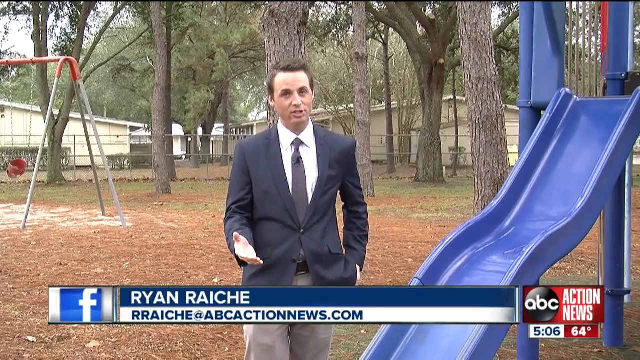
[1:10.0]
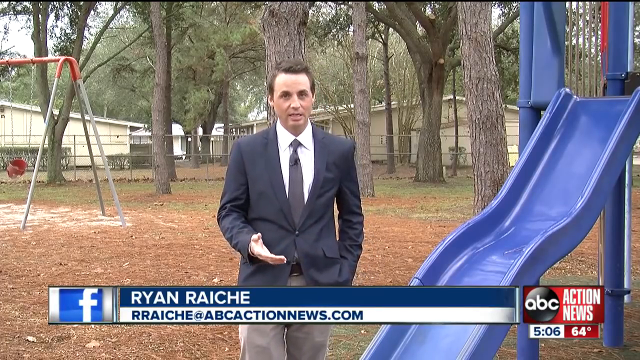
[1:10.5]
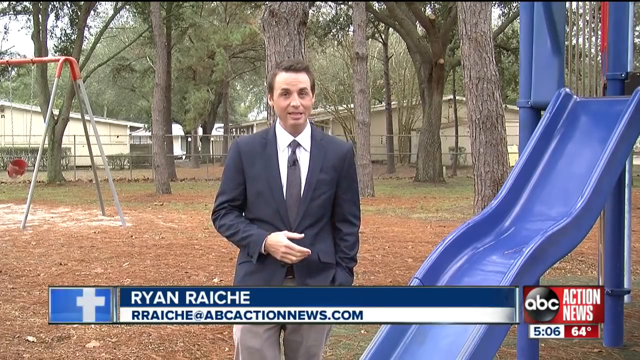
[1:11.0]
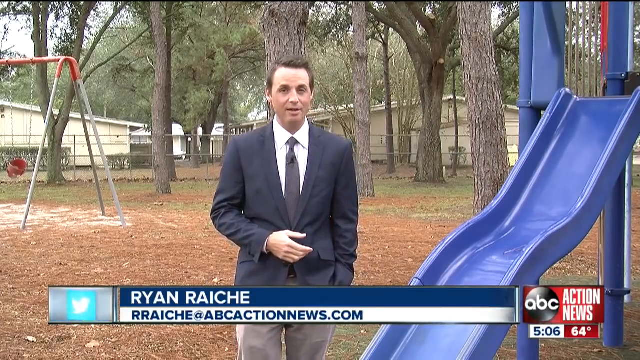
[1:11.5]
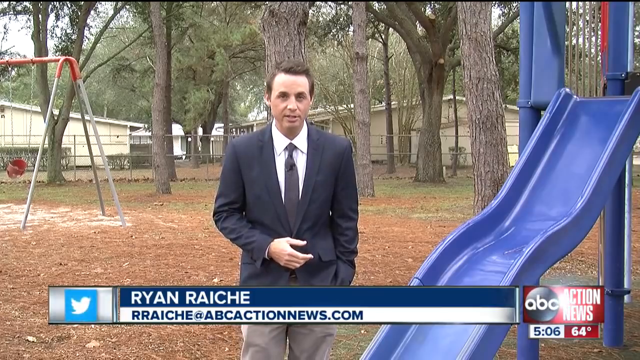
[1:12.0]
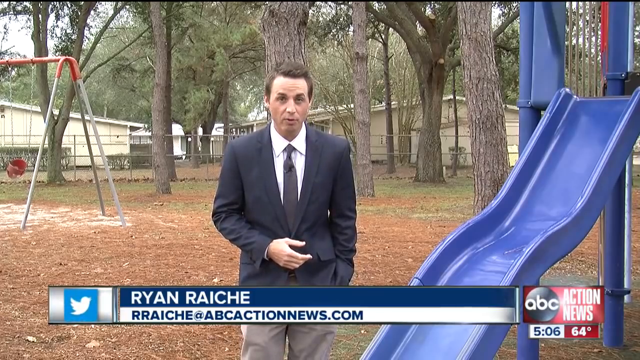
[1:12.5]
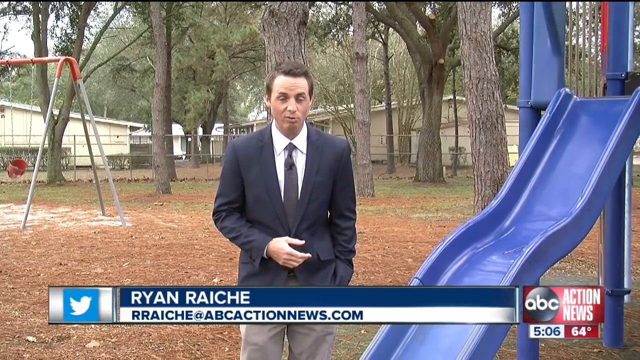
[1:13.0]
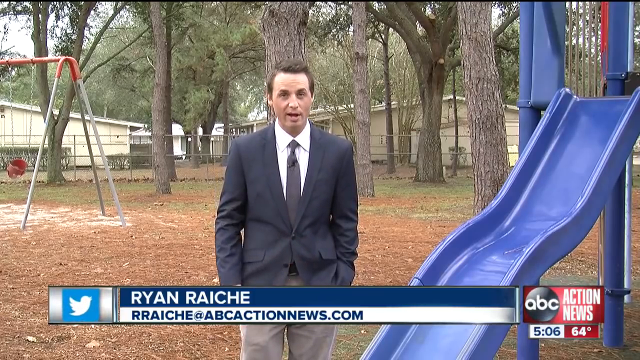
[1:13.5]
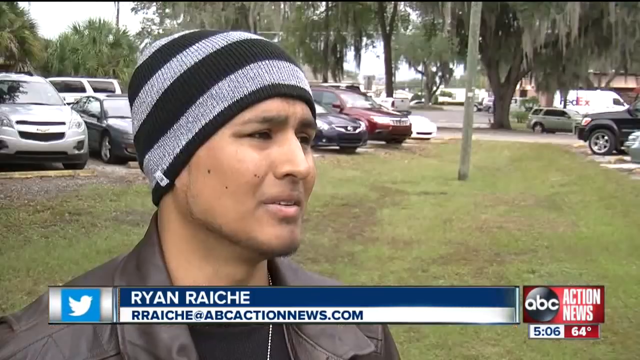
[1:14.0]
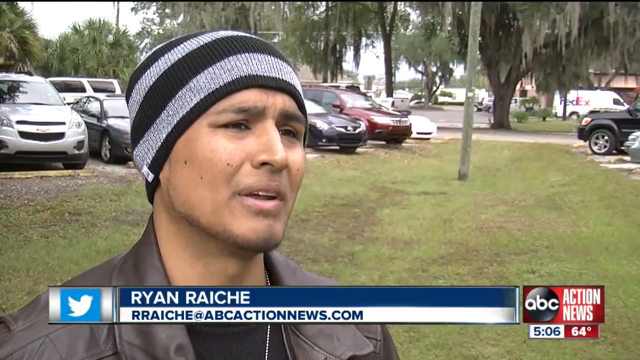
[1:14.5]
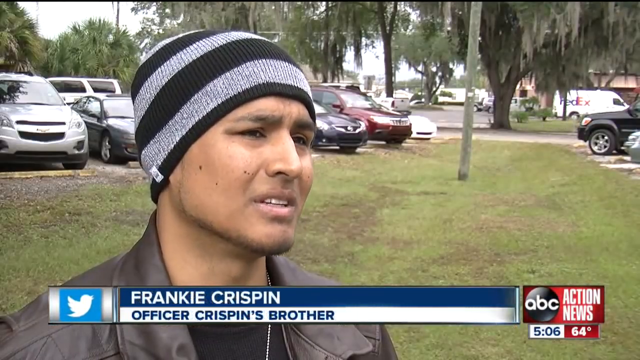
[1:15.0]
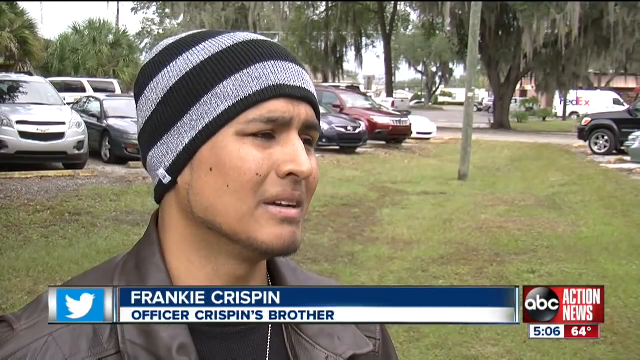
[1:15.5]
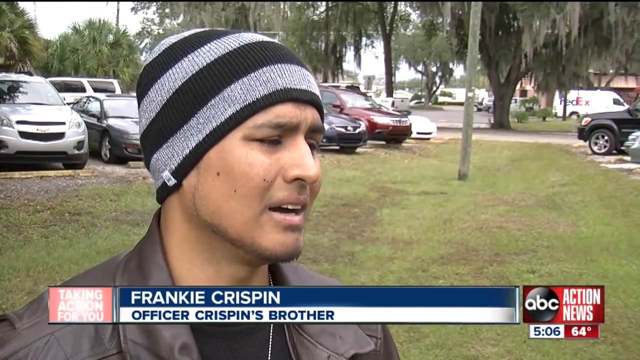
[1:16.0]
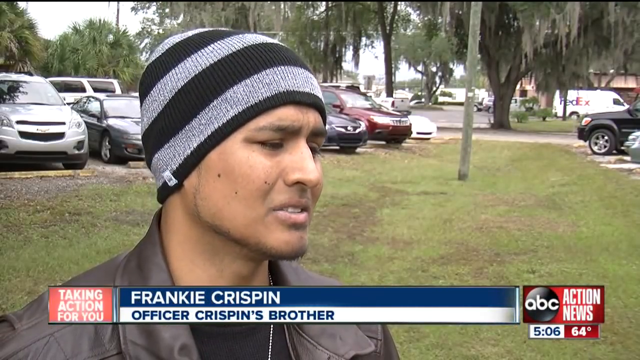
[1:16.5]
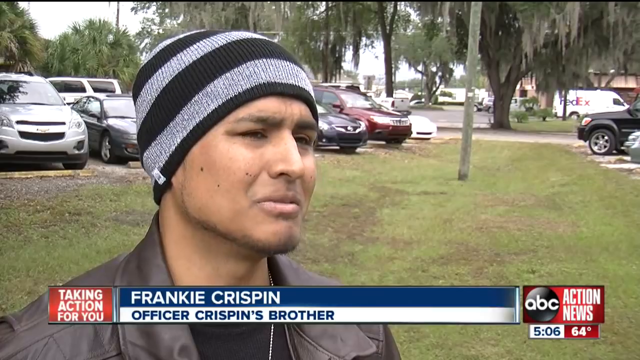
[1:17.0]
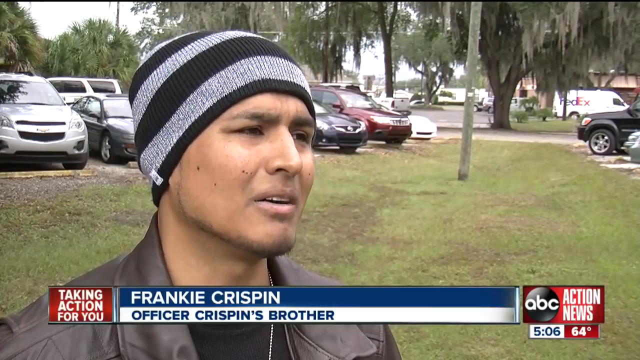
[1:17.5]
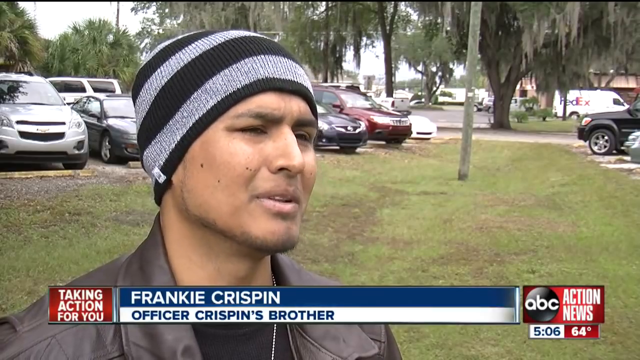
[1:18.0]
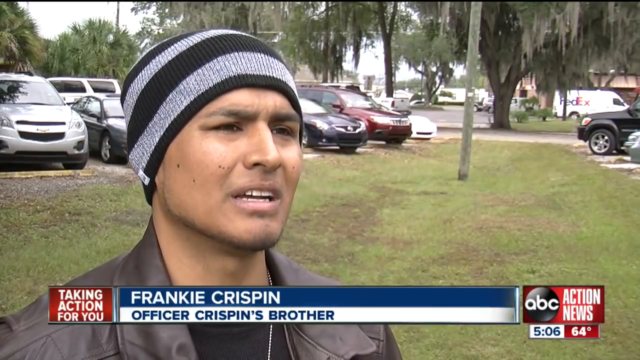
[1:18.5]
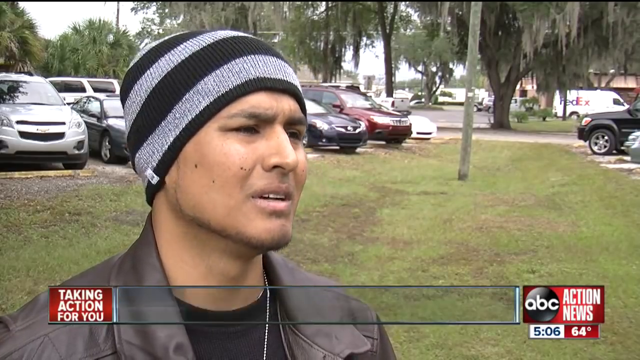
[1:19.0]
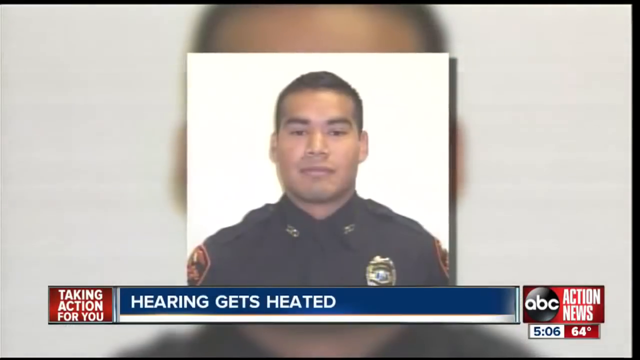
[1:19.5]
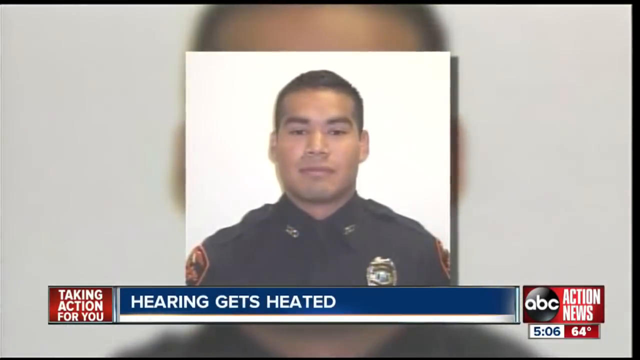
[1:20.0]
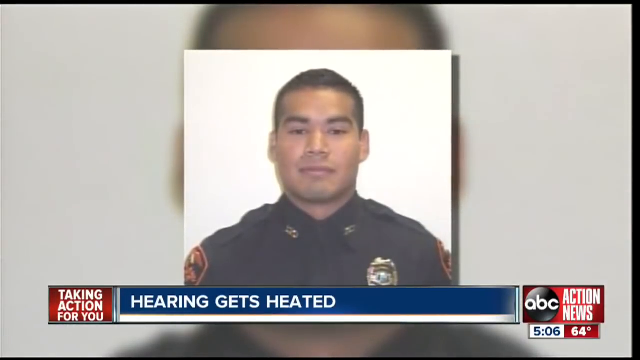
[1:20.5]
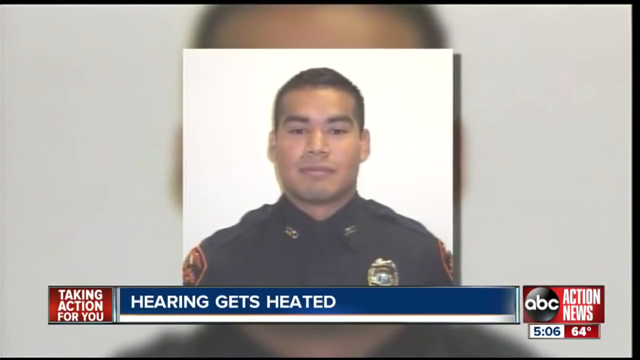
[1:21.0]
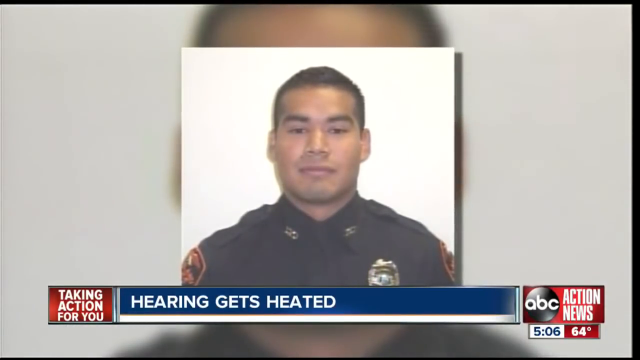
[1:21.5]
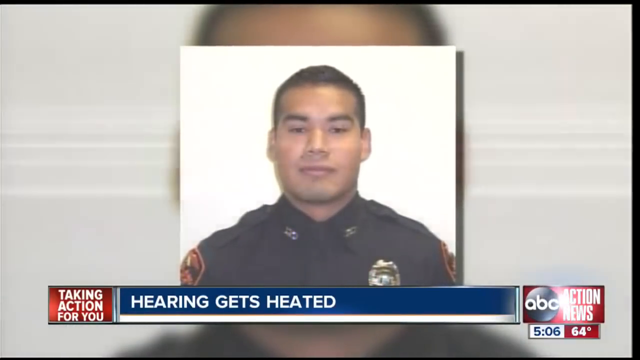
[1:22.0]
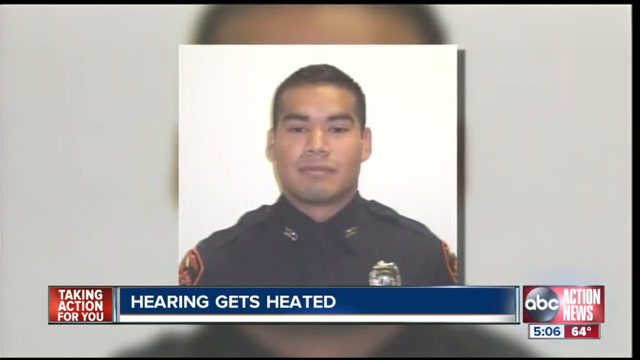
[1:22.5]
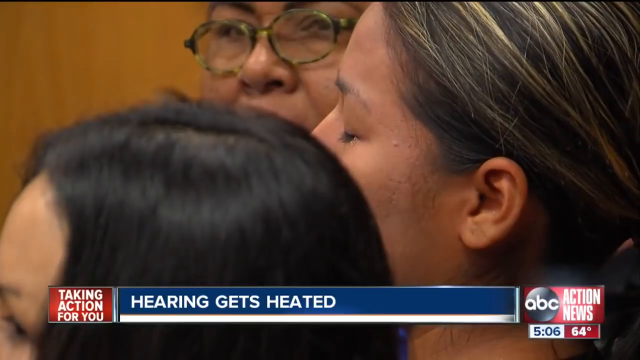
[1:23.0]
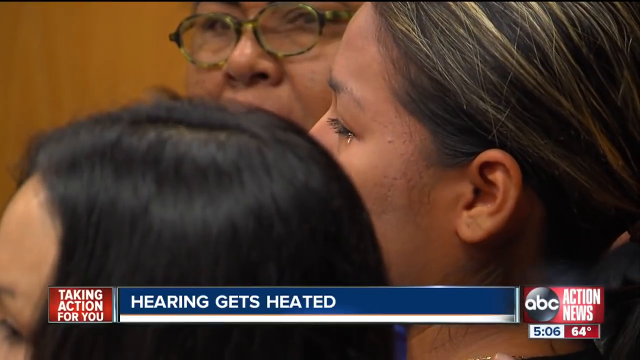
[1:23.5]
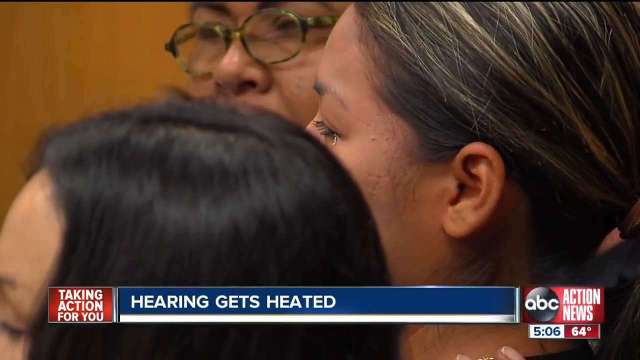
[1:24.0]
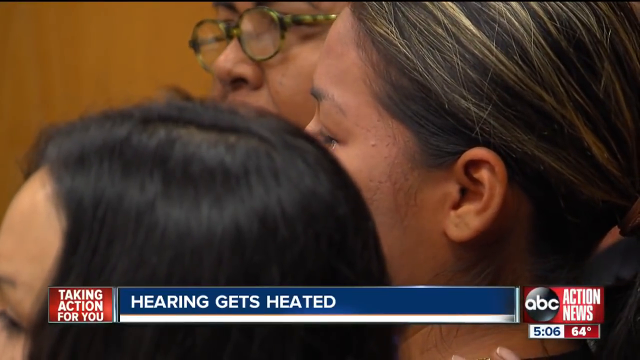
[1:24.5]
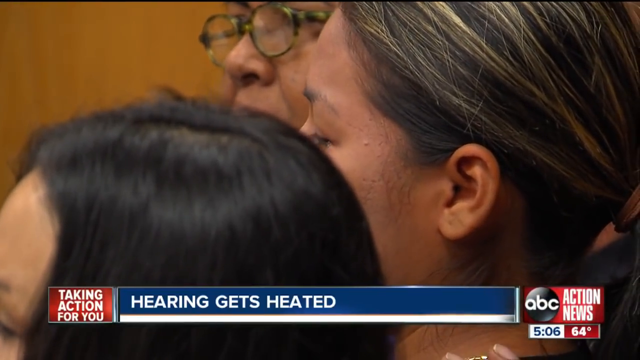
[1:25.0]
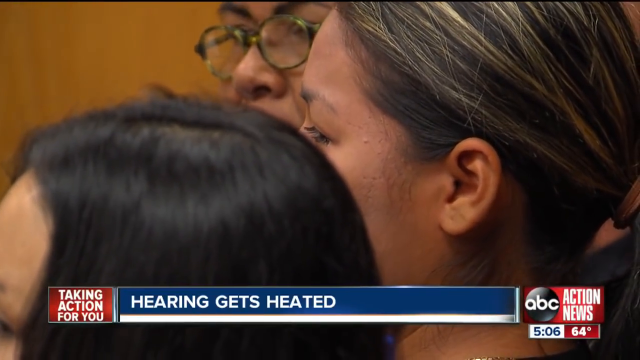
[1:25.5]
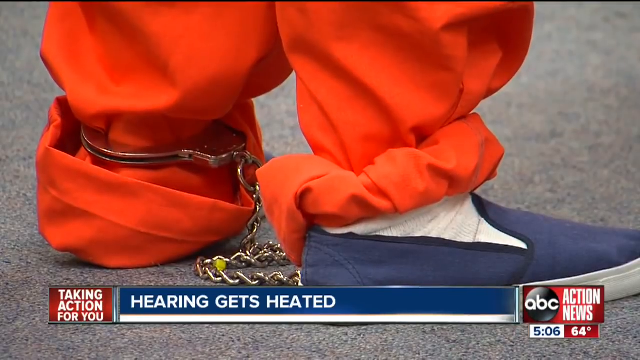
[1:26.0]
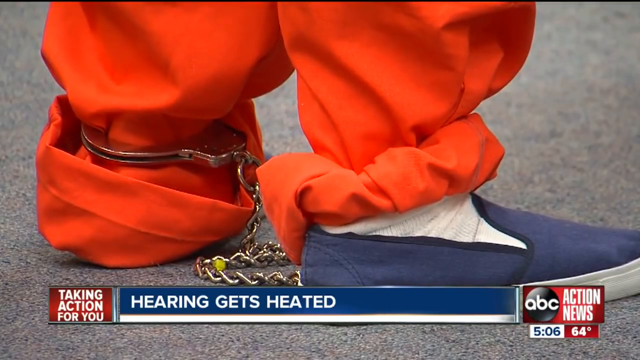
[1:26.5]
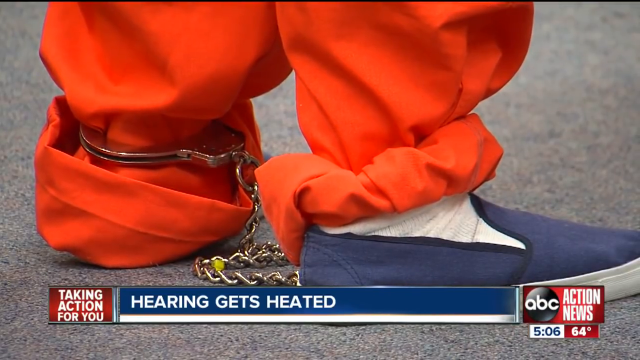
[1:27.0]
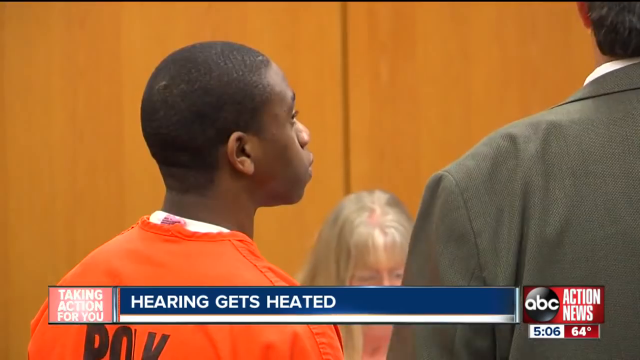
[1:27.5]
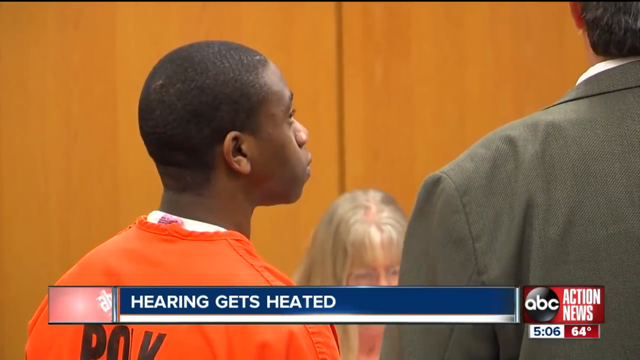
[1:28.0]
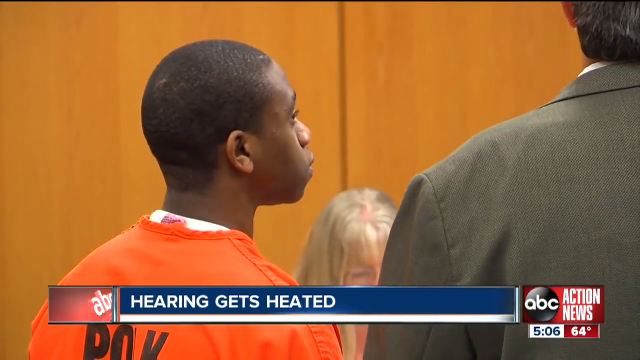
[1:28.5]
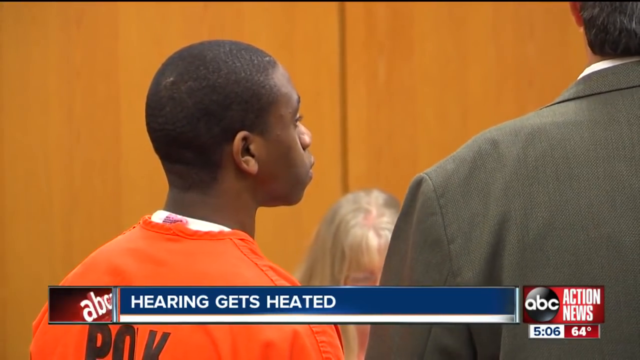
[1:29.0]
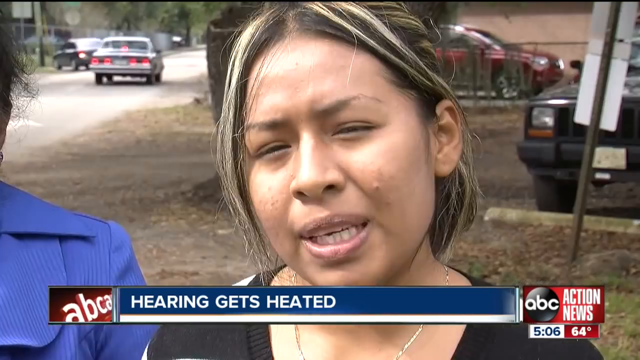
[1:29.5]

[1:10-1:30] The man is still standing in the park, talking and looking back and forth. He wears a black blazer over a white long-sleeved shirt with a black tie, and he has a clean-shaven face and short black hair. Behind him is still the park with the mulch bed and grass surrounding it, and the two houses are still visible in the distance. Under his name, the screen now shows where to follow him on Twitter. As he continues talking, the scene changes to a younger man being interviewed. He has very tanned skin and a clean-shaven face, and wears a brown jacket over a black shirt, a gold chain, and a gray and black beanie. Behind him are many cars, with what appears to be a parking lot on the left. Five cars are visible, including a blue and red SUV on the right, a silver van on the left, and a gray car. Behind the man is a patch of grass with one telephone pole coming out of it. Further back are the parking lot and a road, and a FedEx truck is parked in the background next to a big building.